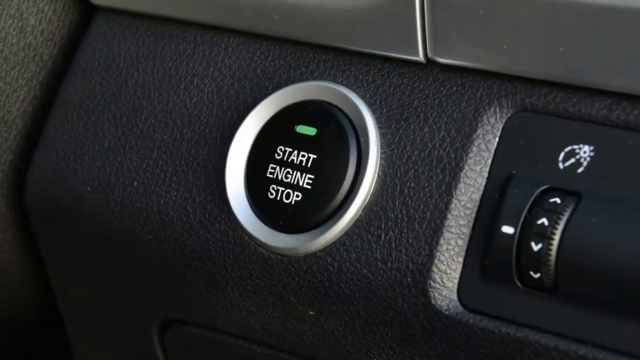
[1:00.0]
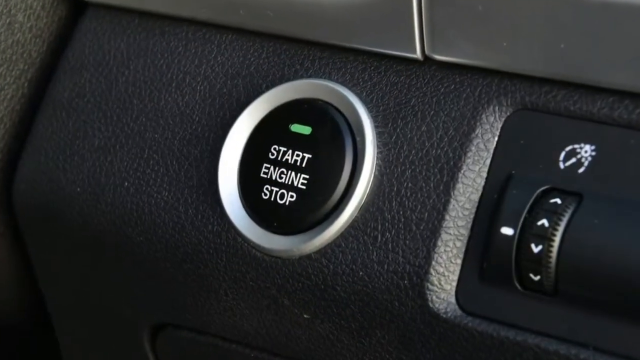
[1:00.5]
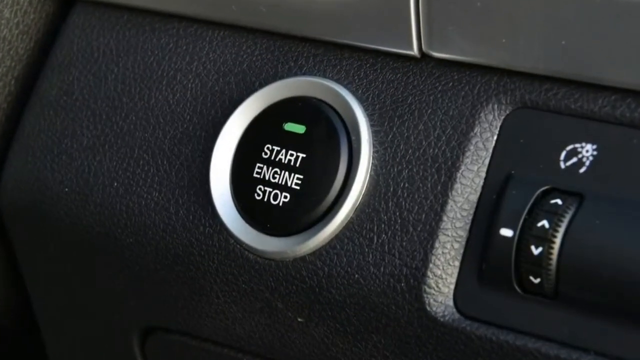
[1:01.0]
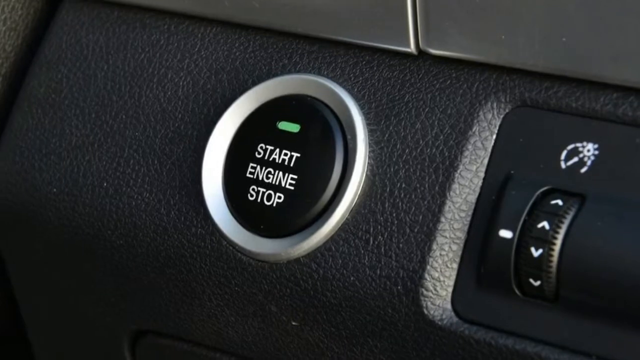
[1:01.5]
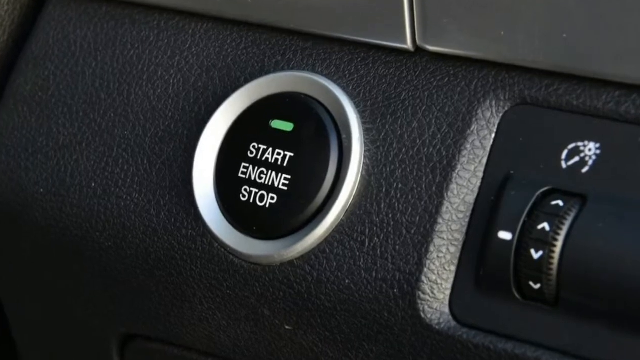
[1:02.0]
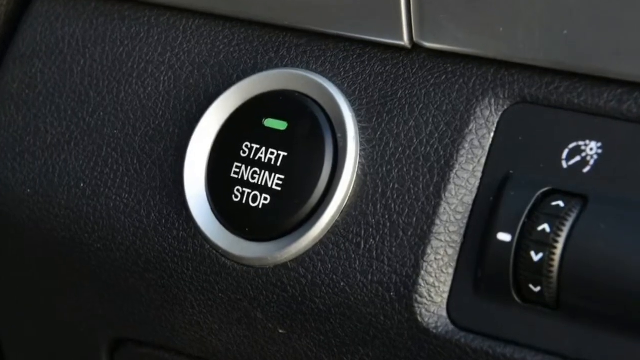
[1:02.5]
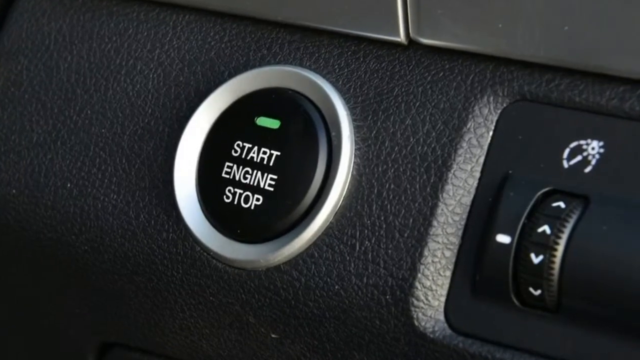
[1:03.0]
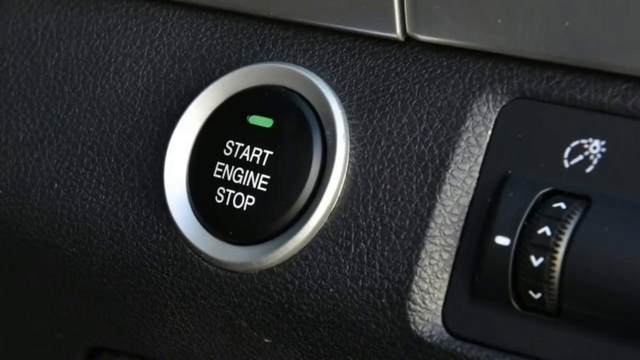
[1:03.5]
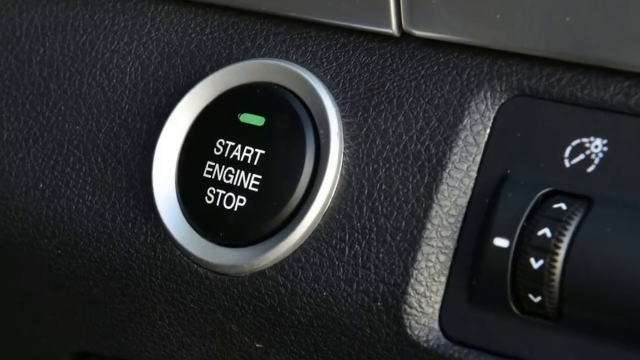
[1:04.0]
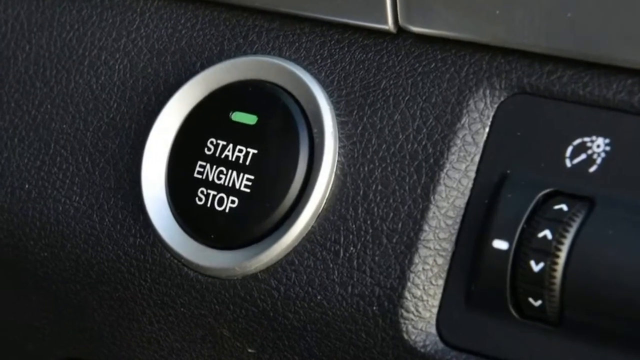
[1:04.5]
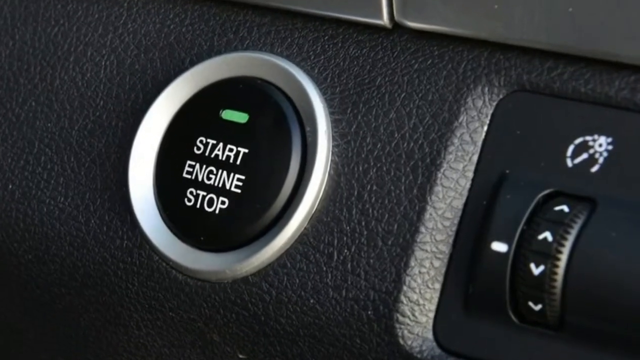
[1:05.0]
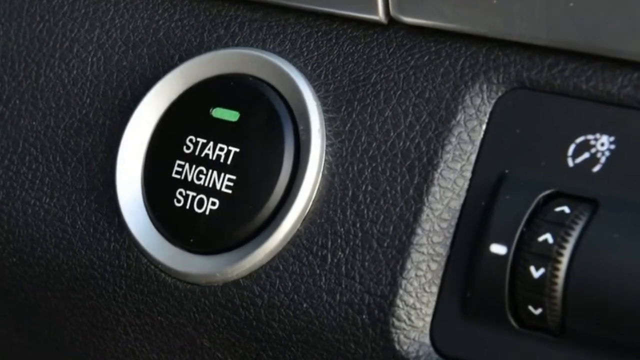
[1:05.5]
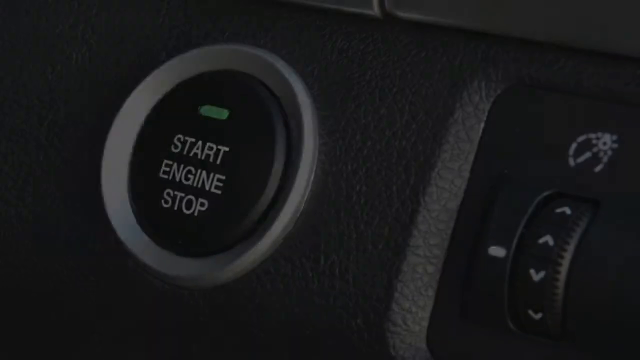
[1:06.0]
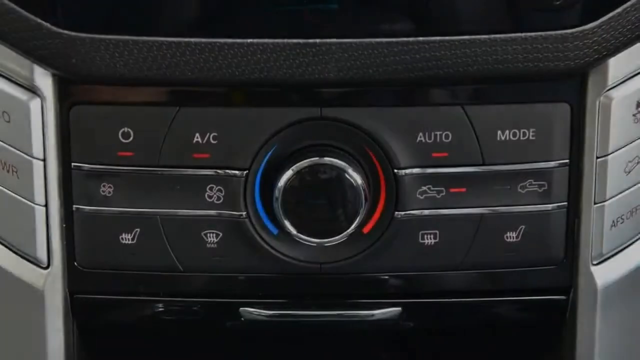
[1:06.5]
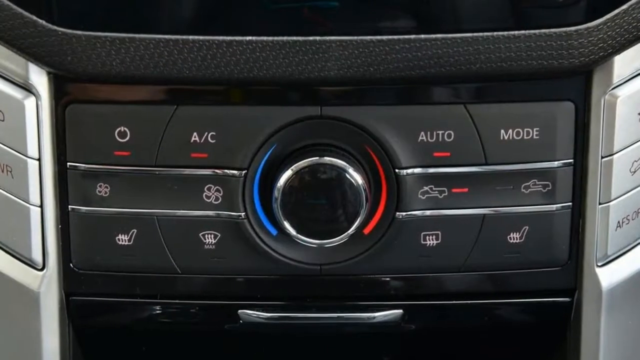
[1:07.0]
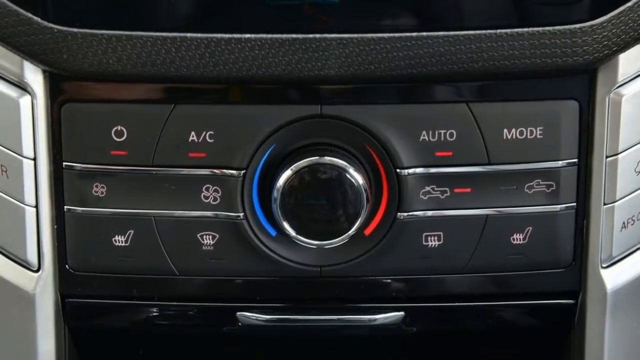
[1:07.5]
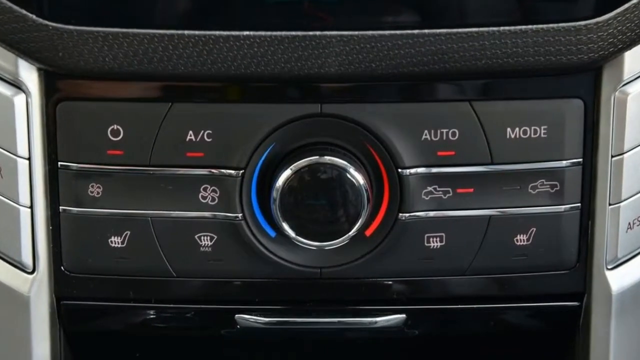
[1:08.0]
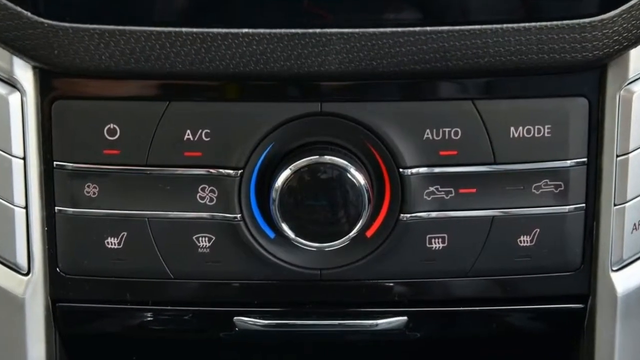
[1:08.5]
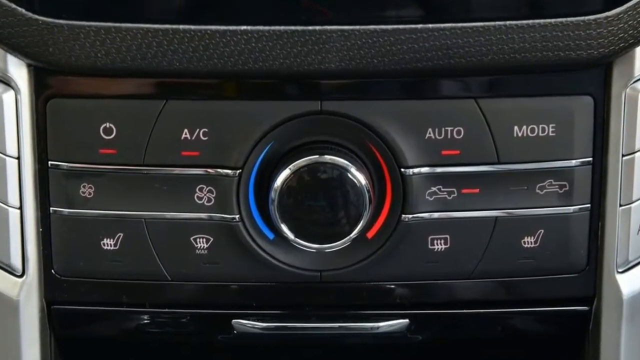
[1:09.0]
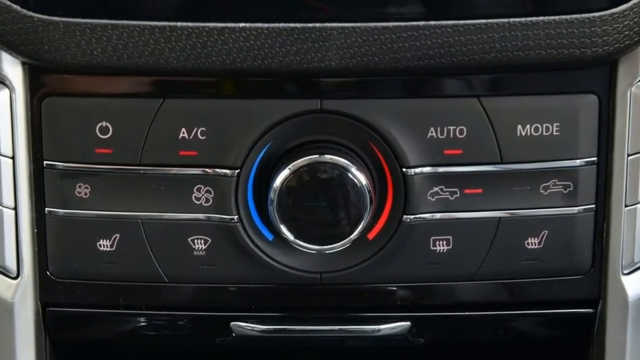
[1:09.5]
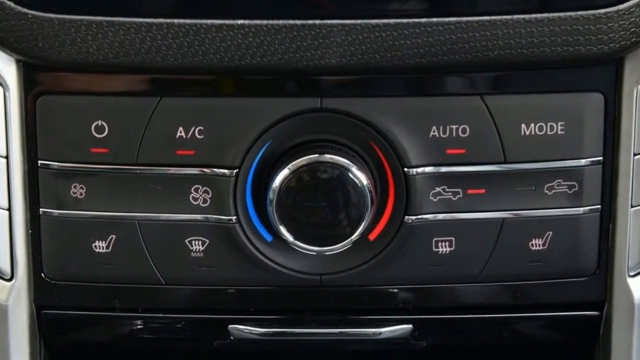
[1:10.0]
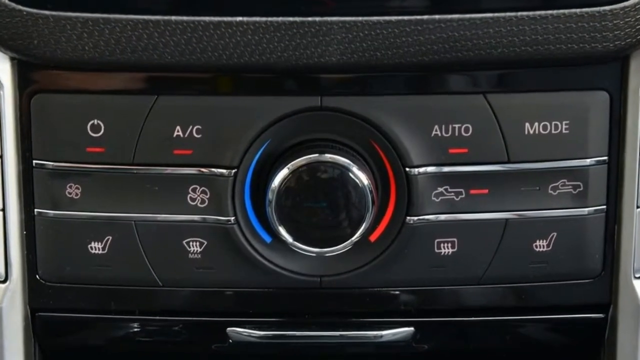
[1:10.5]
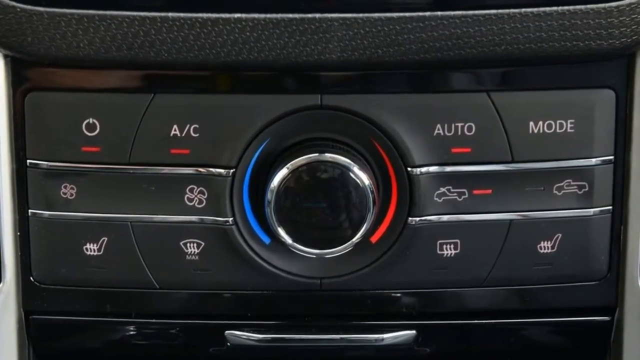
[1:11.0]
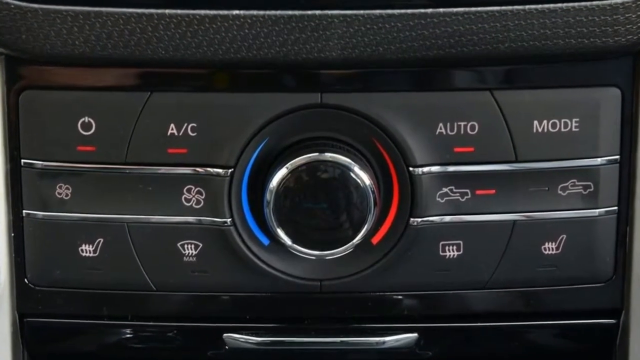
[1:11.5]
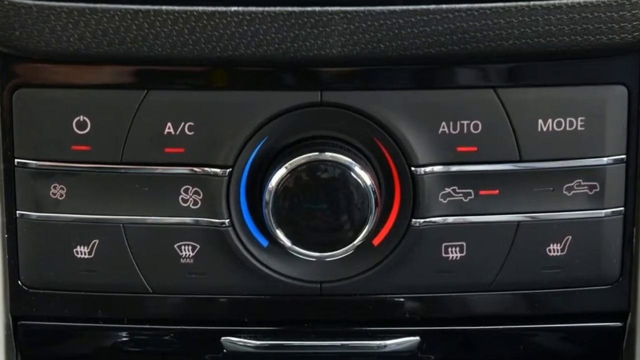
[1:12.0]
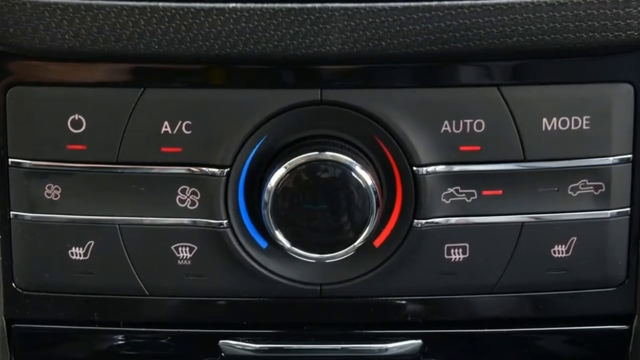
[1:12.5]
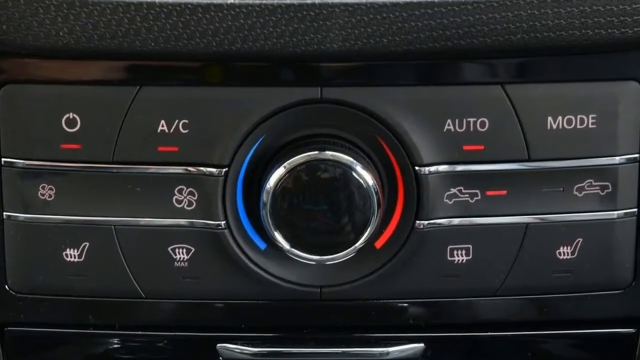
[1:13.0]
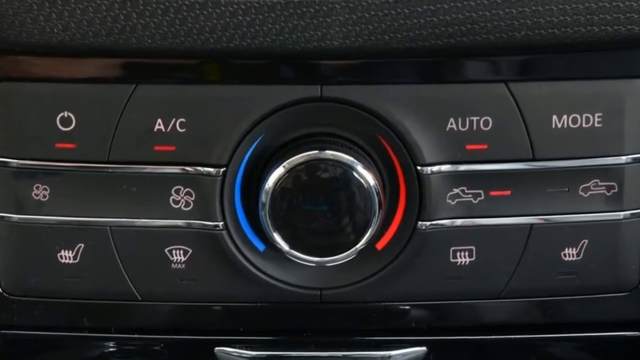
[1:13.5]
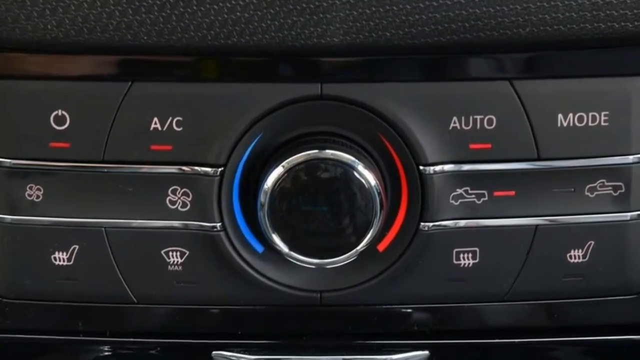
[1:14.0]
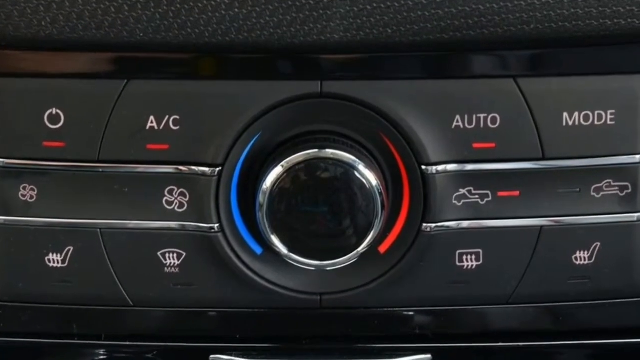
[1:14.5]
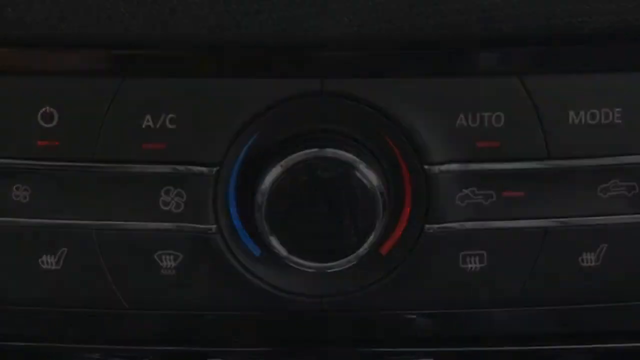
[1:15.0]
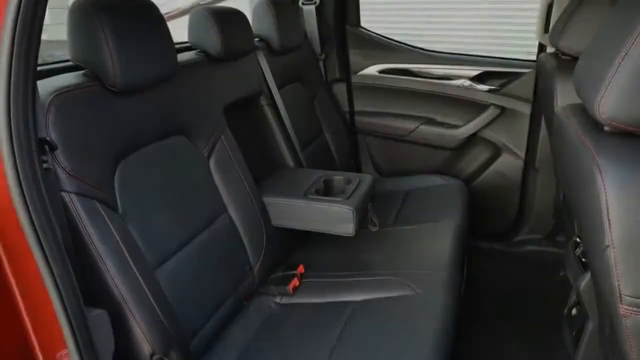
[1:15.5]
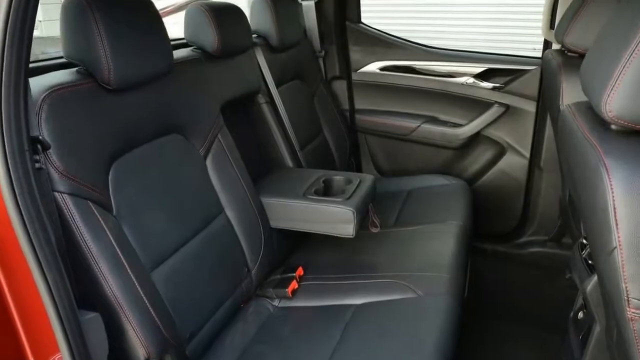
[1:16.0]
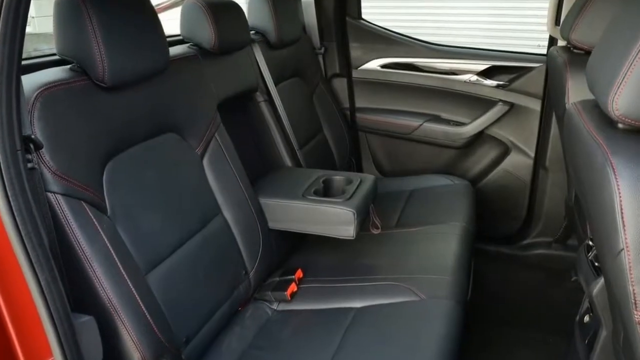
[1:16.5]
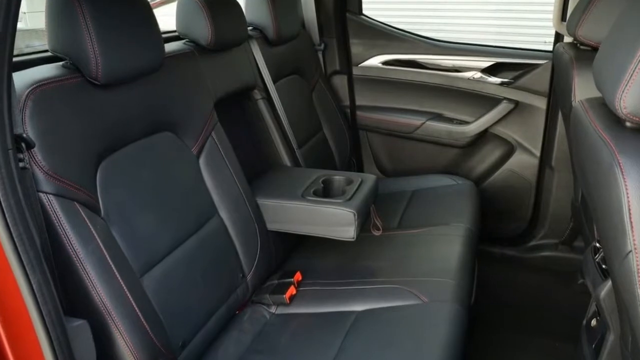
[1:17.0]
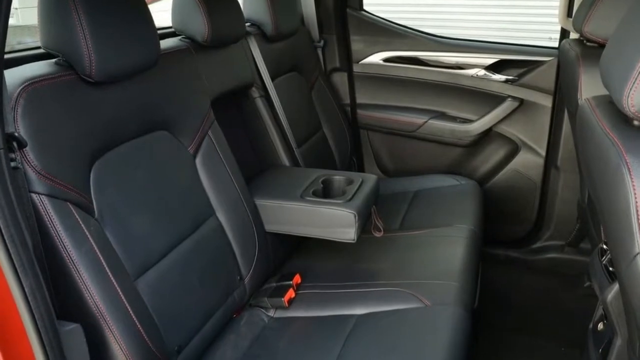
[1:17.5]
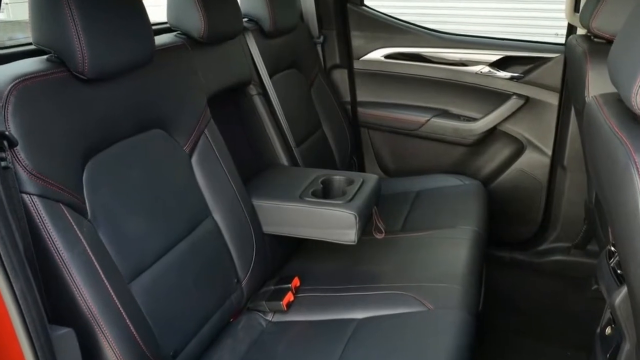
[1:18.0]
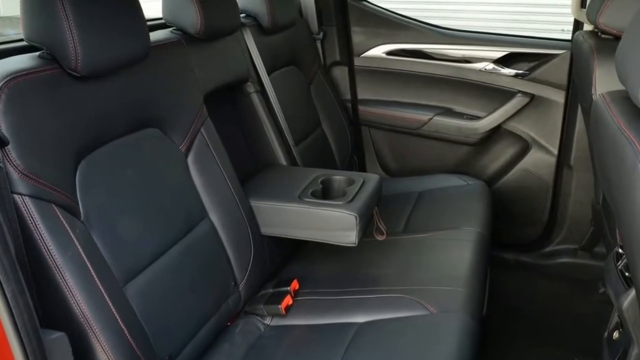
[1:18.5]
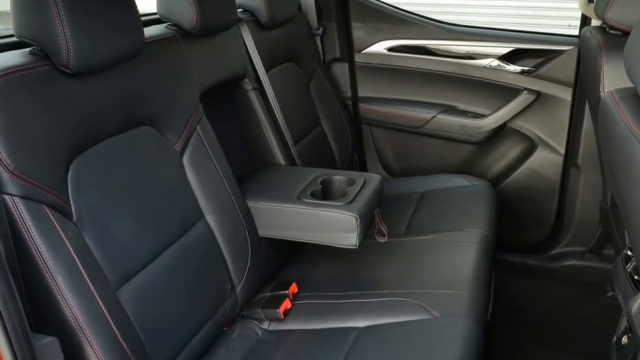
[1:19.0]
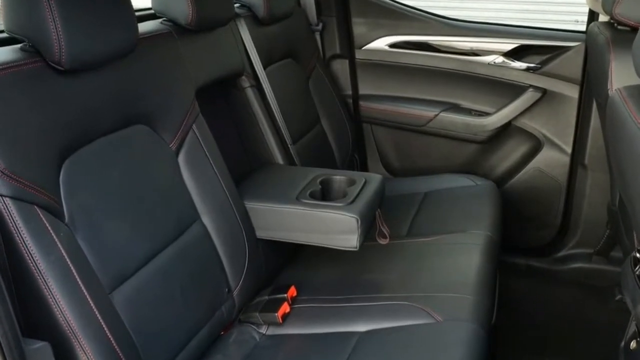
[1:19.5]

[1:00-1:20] The lit-up engine button shows a small green hash and says "start engine stop." It quickly cuts to the AC area for the air conditioning and fan. Then, in the back seat, a cup holder between the two passenger seats is shown; it can be folded up and hidden away, and in this position it is open. The interior of the car is gray, with black seat belts, and the buckle where the seat belt plugs in has a red release button. Some light shines in the window in the upper right-hand corner of the back seat.